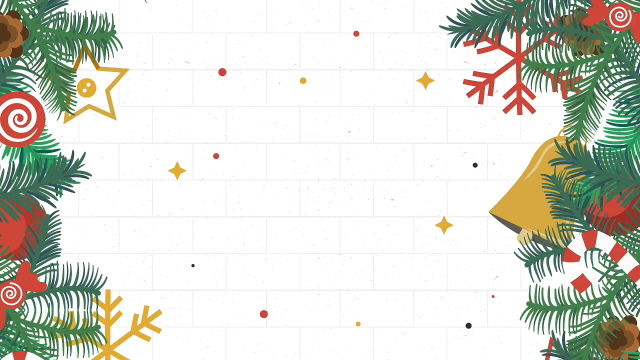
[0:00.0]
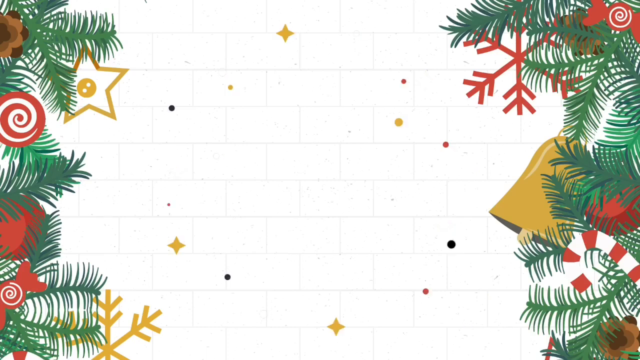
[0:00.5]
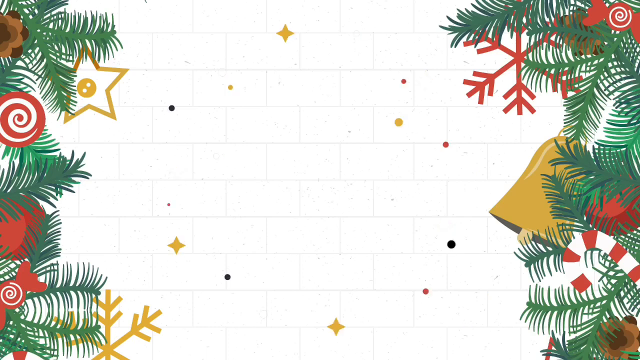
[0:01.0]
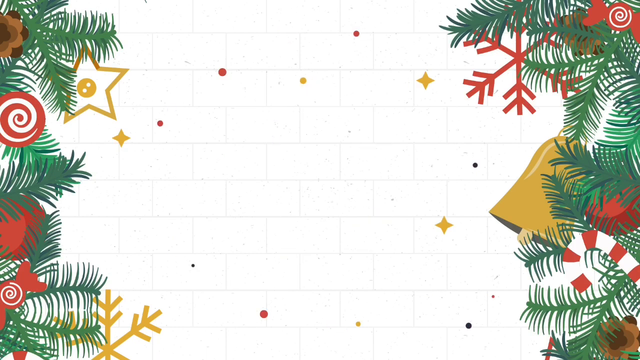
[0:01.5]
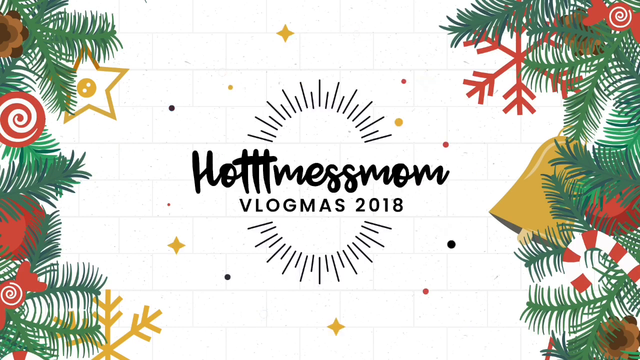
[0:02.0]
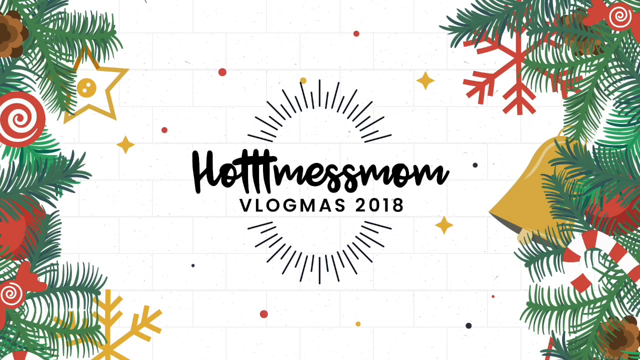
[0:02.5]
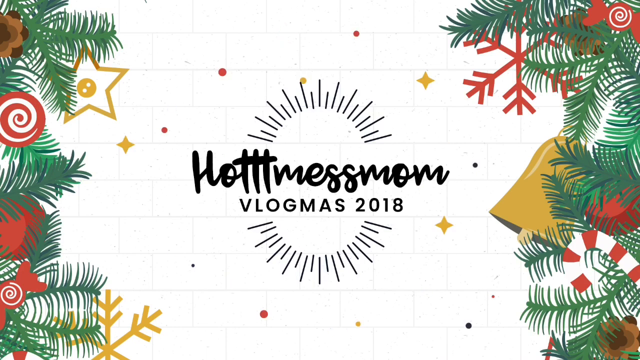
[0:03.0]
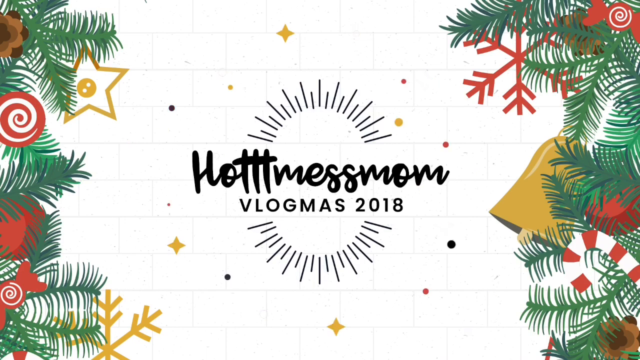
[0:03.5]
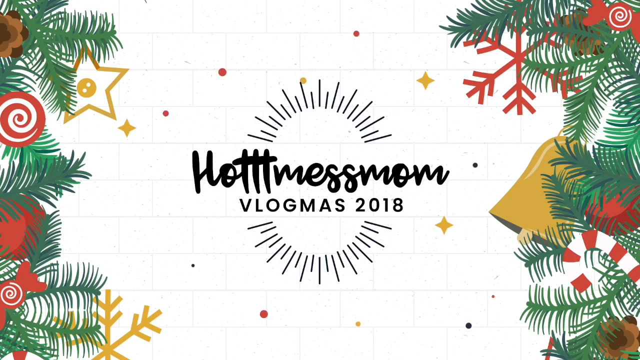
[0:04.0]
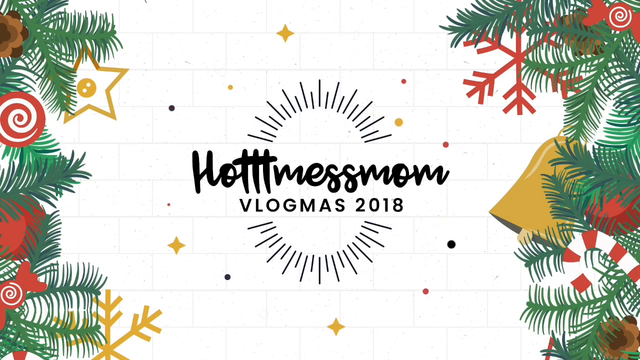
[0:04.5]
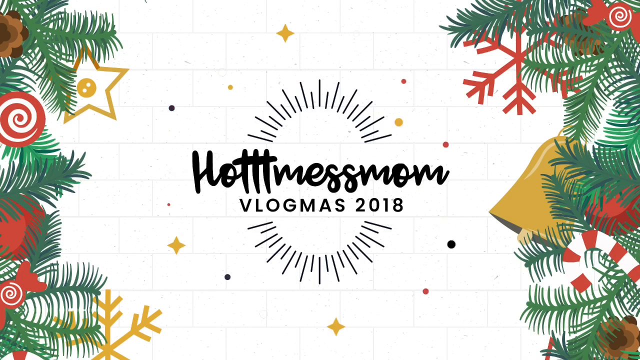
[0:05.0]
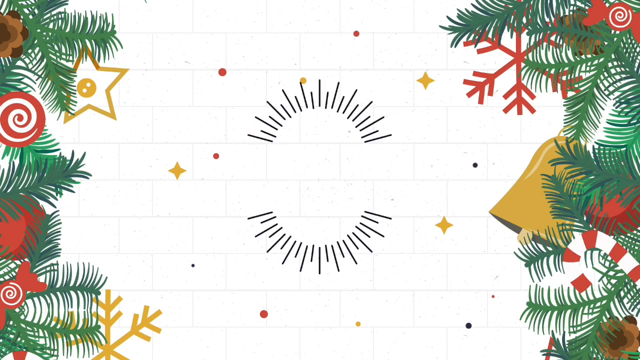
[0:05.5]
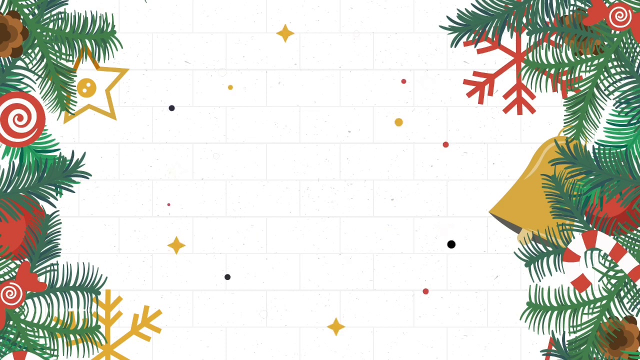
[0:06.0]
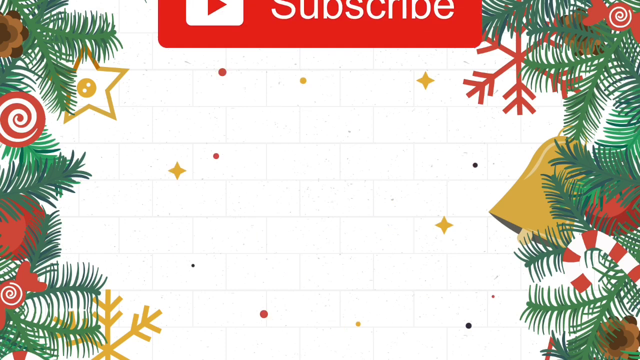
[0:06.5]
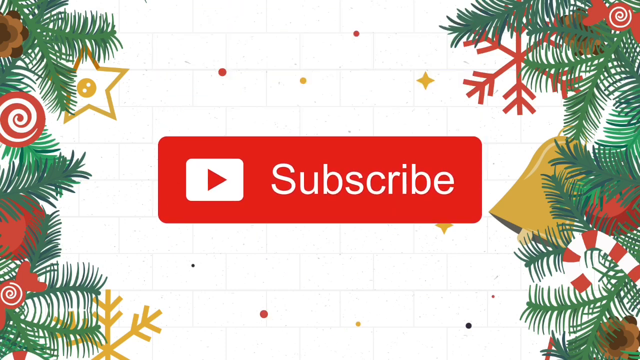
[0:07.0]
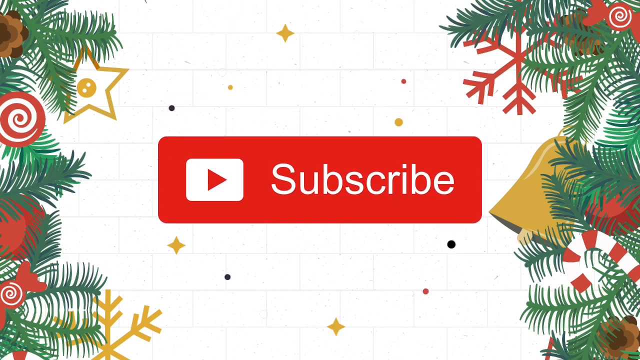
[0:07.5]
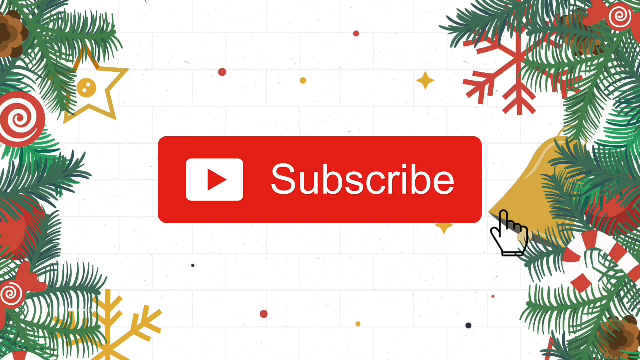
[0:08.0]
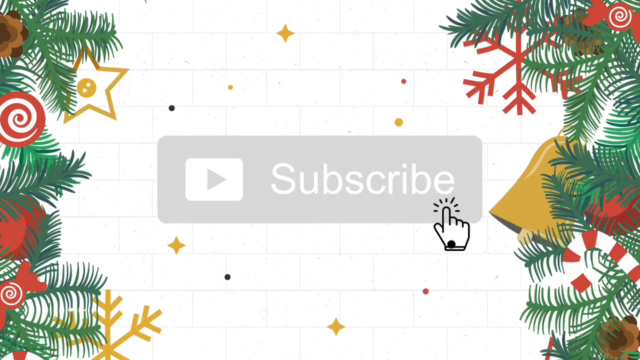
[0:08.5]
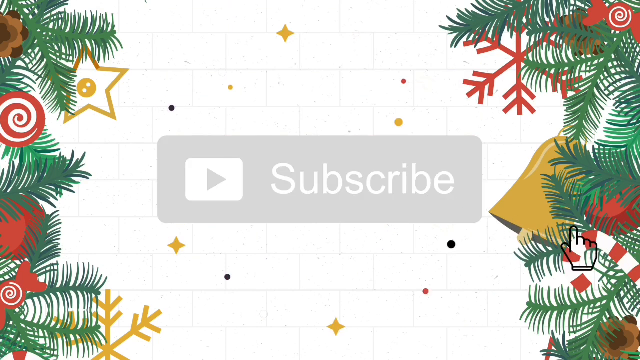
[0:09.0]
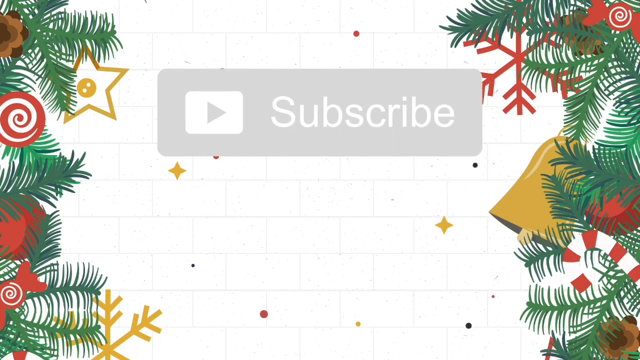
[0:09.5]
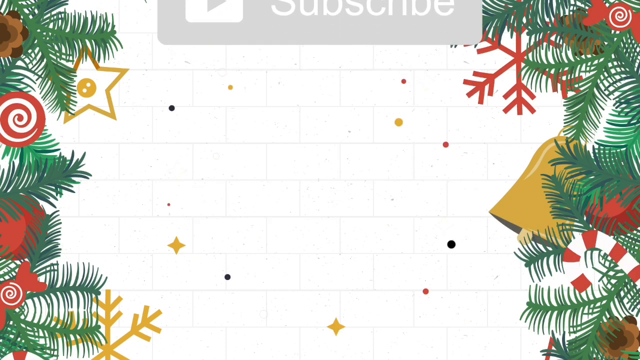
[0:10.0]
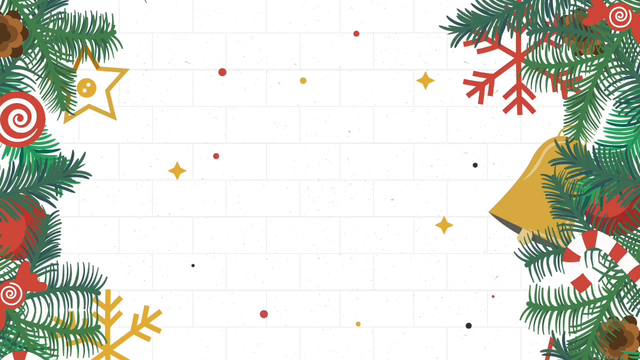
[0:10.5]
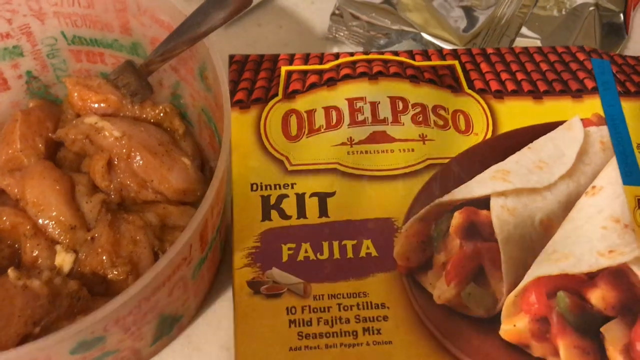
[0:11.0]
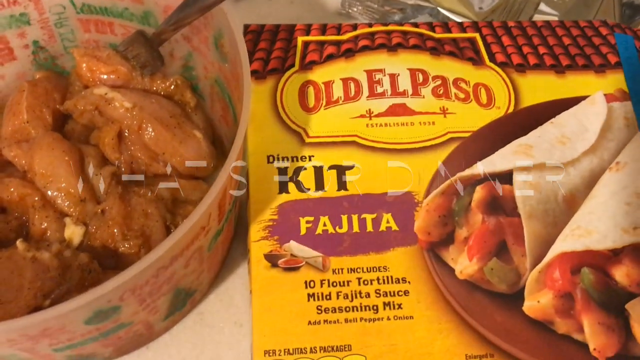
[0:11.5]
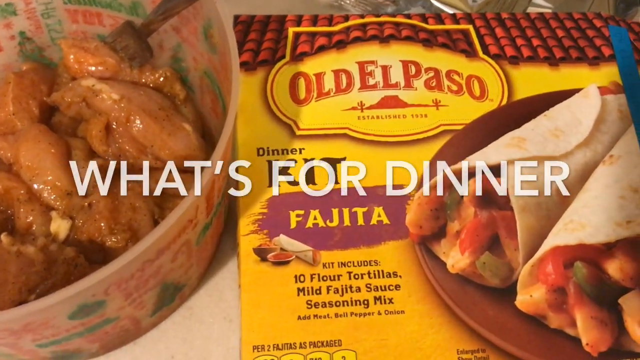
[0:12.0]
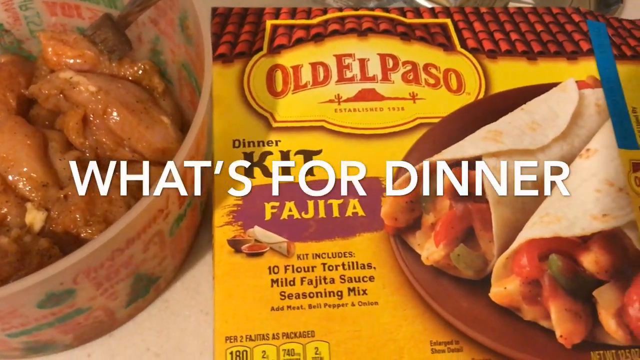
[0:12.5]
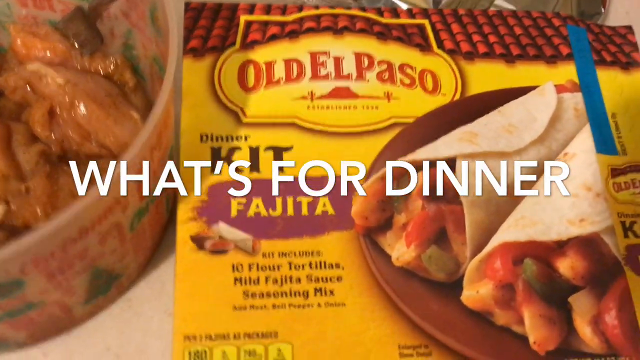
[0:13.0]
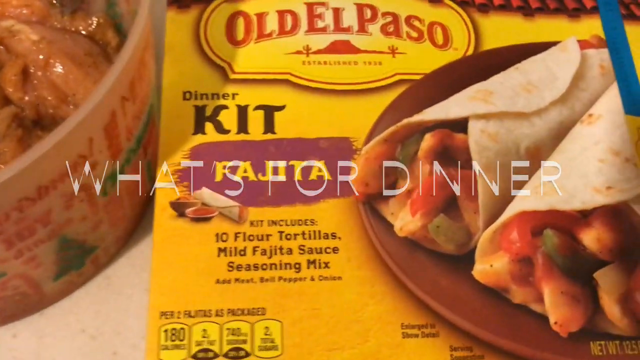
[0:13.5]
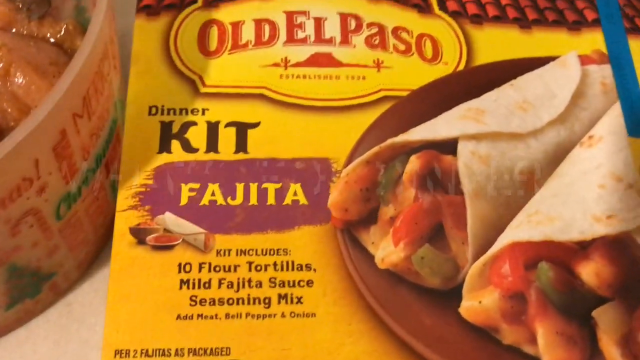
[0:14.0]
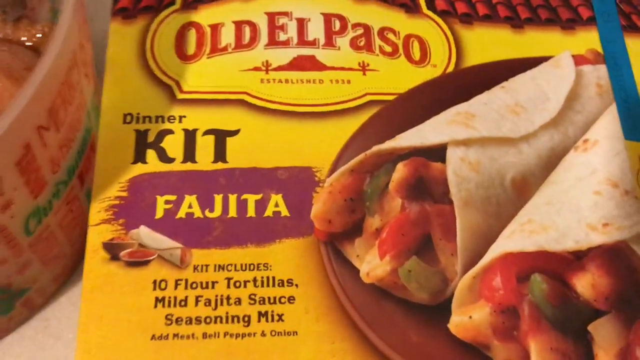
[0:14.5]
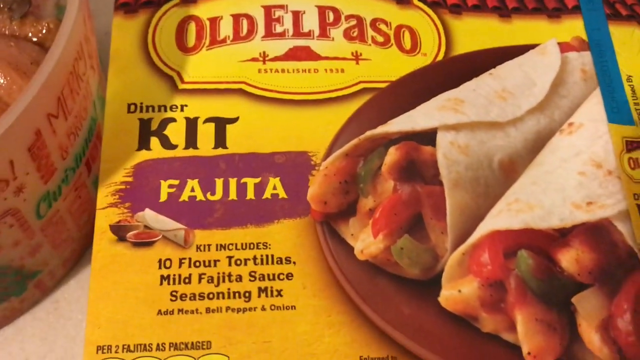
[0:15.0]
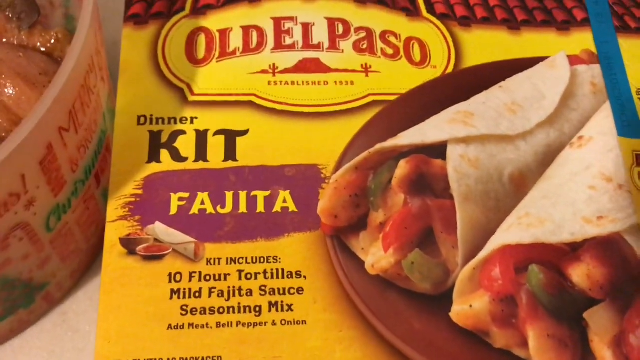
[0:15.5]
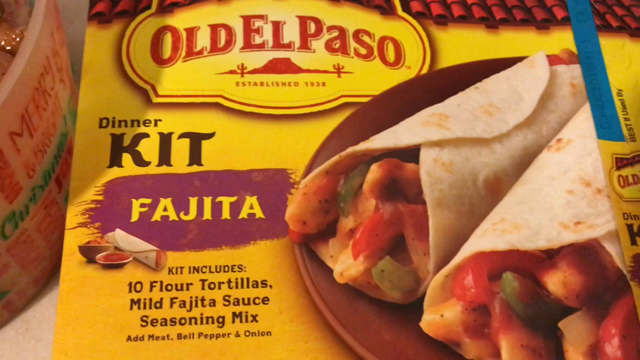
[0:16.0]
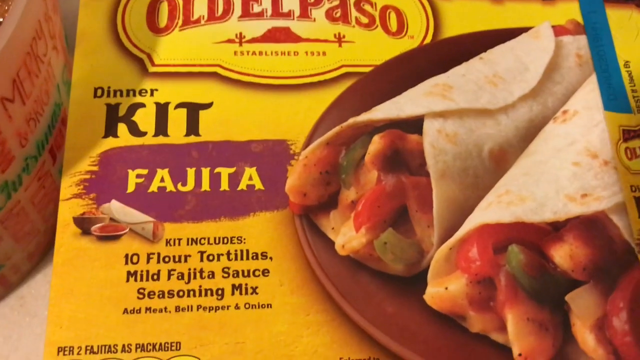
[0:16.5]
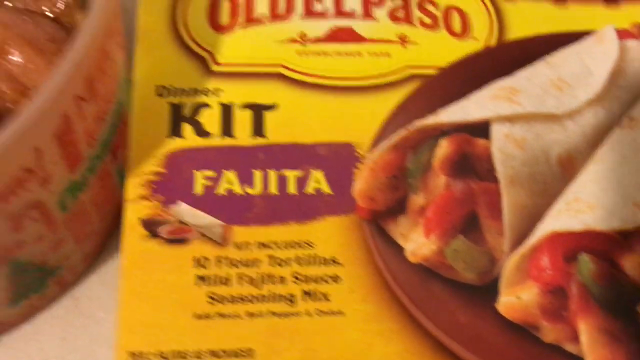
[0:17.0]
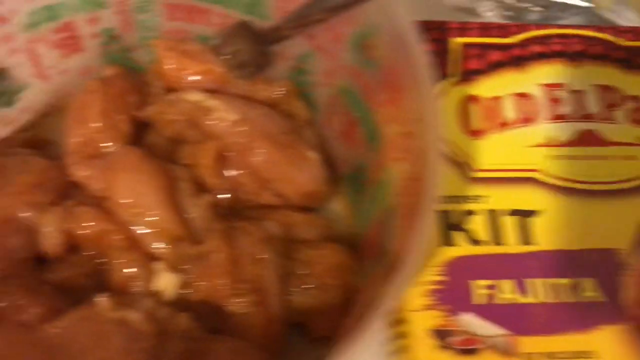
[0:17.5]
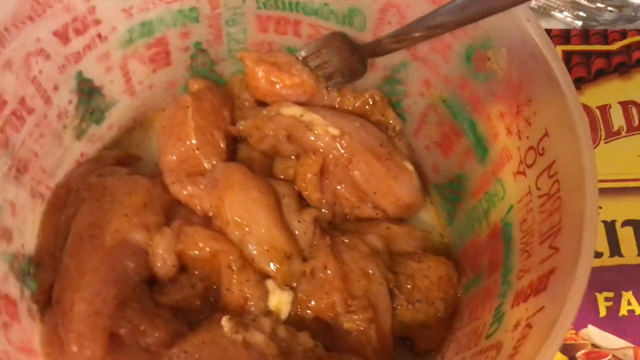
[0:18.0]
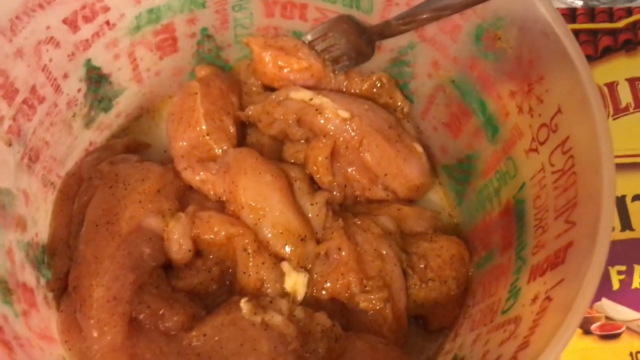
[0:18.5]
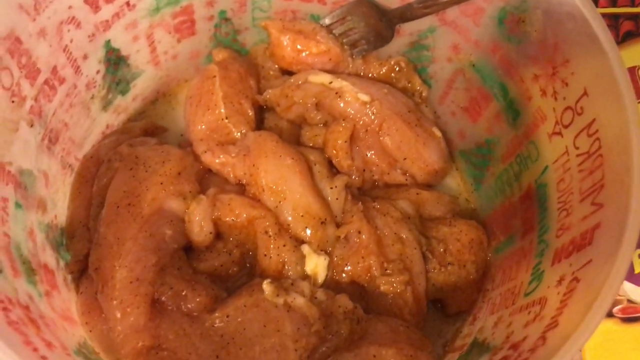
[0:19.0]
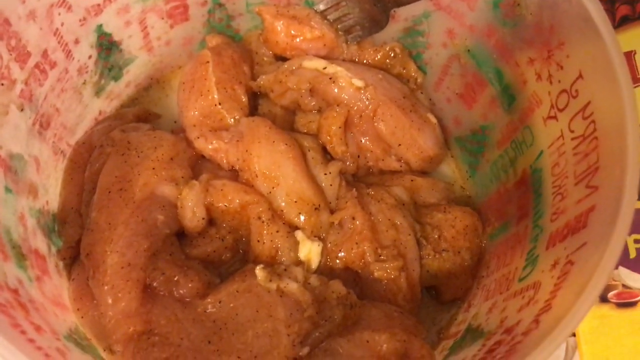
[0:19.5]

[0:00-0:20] The video opens on a screen with what looks to be a Christmas decoration on the side; these are cartoon characters. They pop up to the middle of the screen, where text reads "Hot Mess Mom Vlogmas 2018." A YouTube subscribe button then pops into the middle of the video and a cartoon finger clicks it. The scene switches to a shot showcasing an Old El Paso Dinner Kit for Fajitas, and the text "What's for Dinner" pops on screen. On the left side is a Christmas-themed clear plastic bowl with seasoned chicken tenderloins inside and a metal fork in the bowl. At the top of the screen is some sort of foil packaging. The box for the Old El Paso Fajita Dinner Kit seems to be open, and it is what is being used to make the chicken. The bottom of the box says "kit includes 10 flour tortillas, mild fajita sauce, seasoning mix, just add meat, bell pepper, and onions."